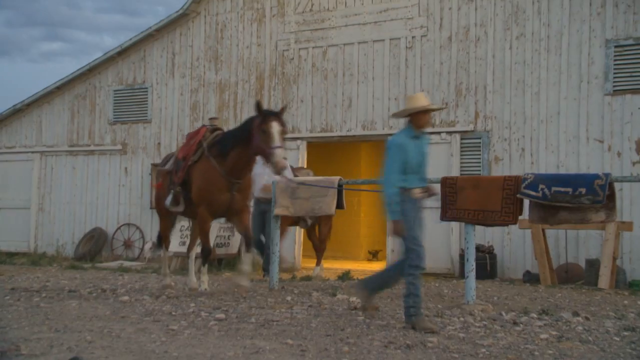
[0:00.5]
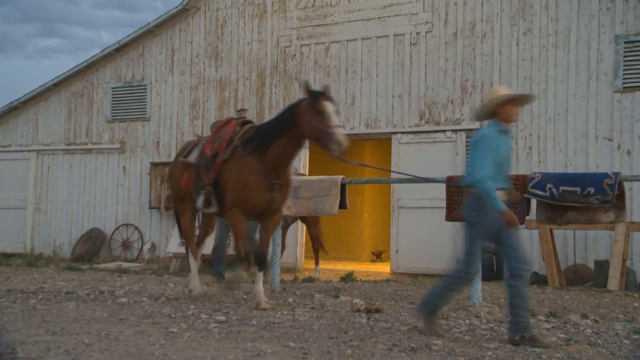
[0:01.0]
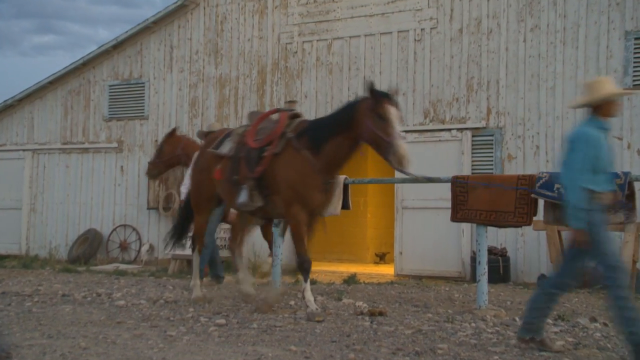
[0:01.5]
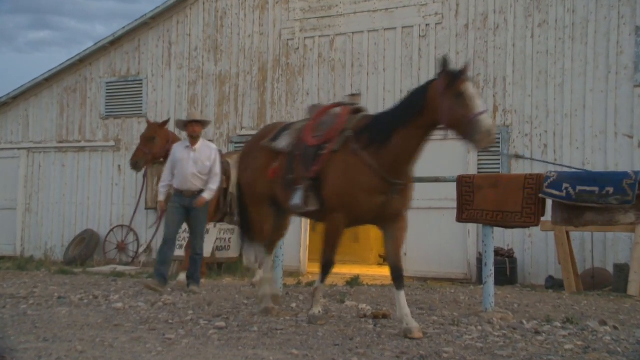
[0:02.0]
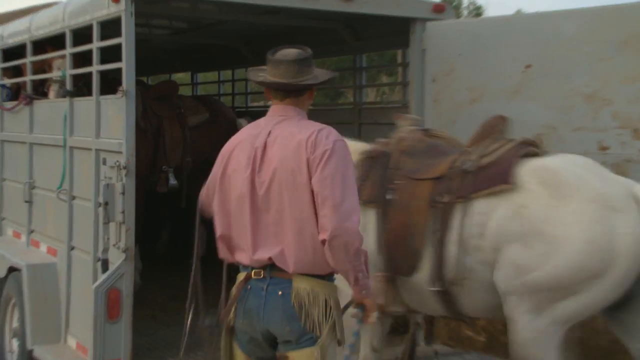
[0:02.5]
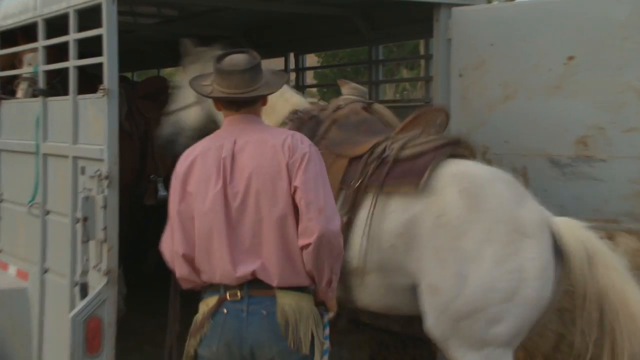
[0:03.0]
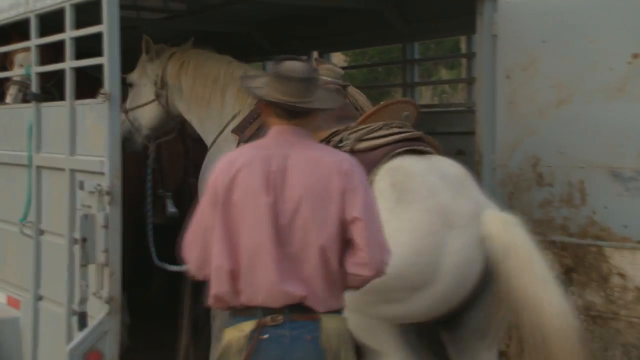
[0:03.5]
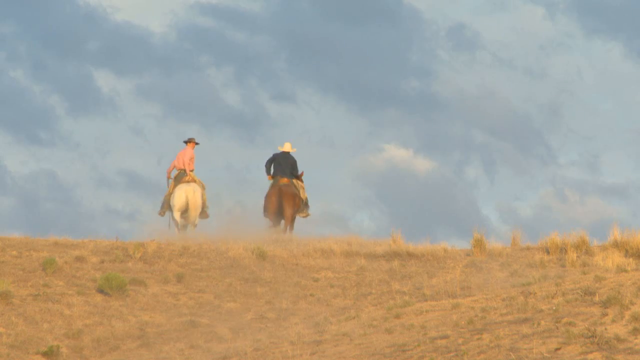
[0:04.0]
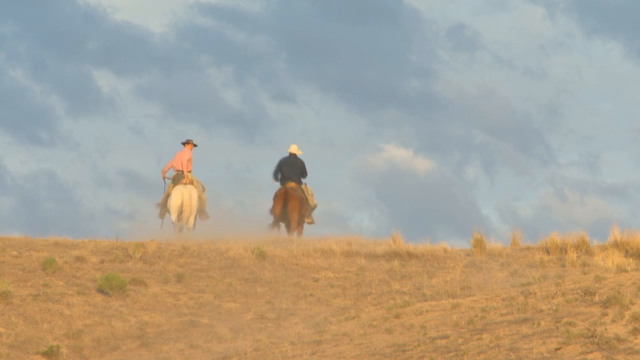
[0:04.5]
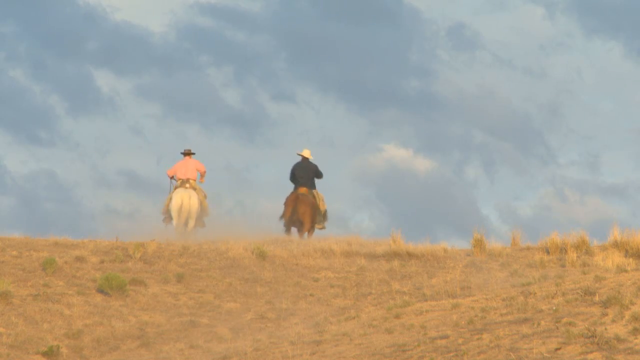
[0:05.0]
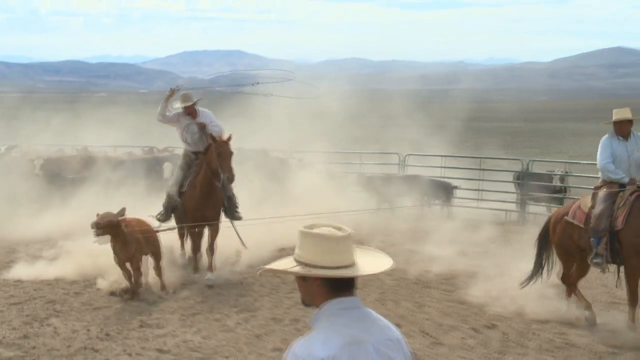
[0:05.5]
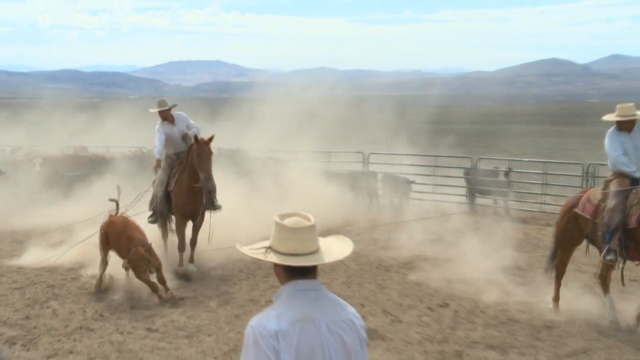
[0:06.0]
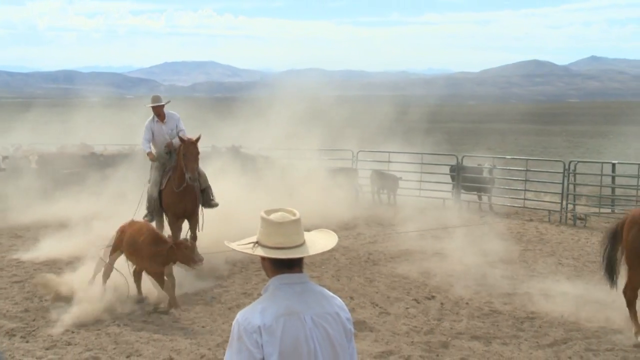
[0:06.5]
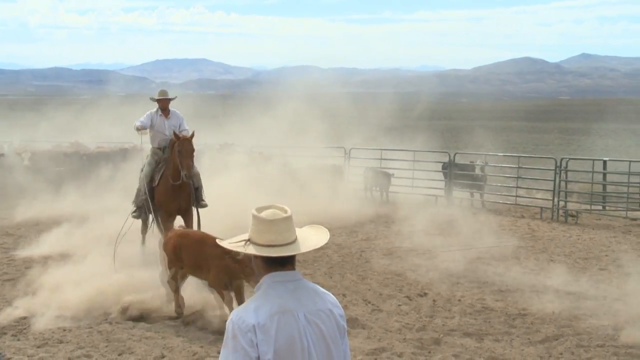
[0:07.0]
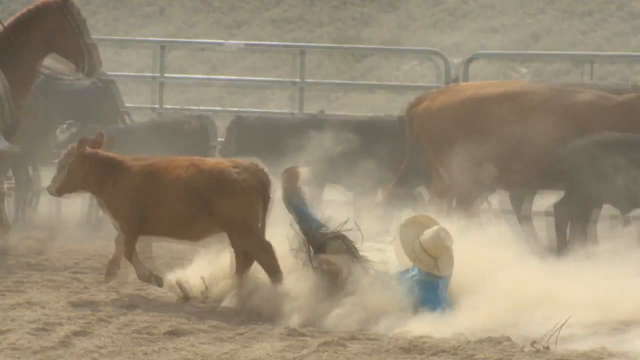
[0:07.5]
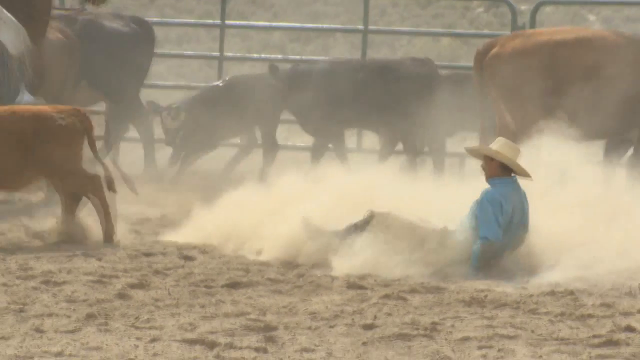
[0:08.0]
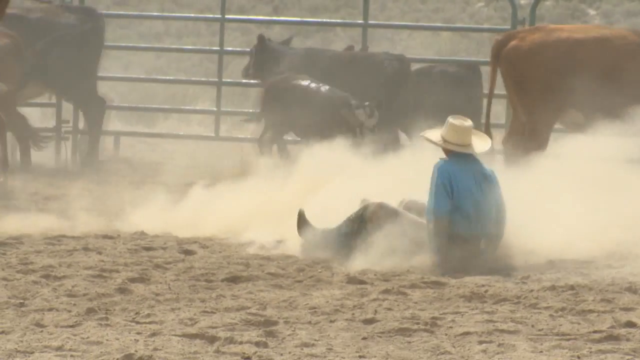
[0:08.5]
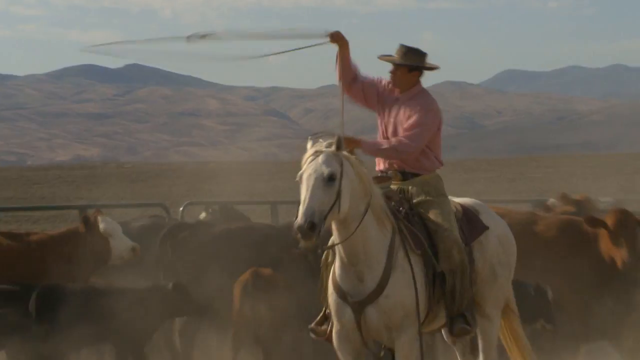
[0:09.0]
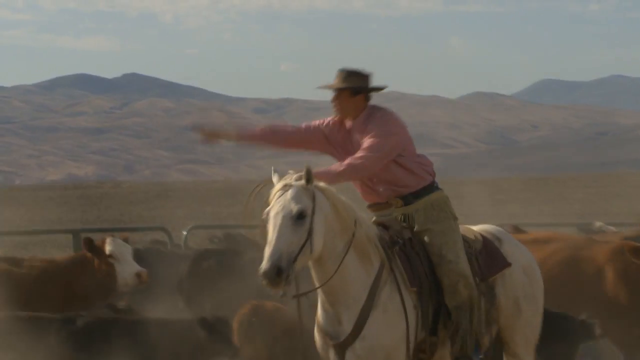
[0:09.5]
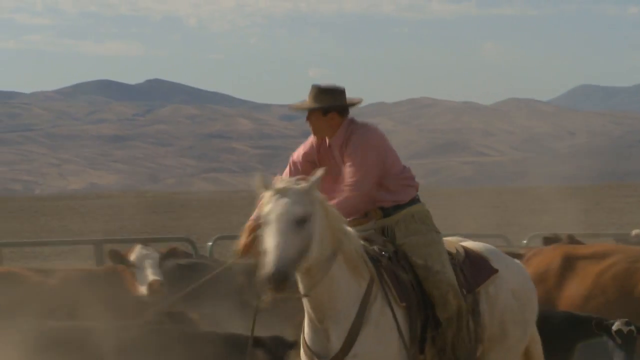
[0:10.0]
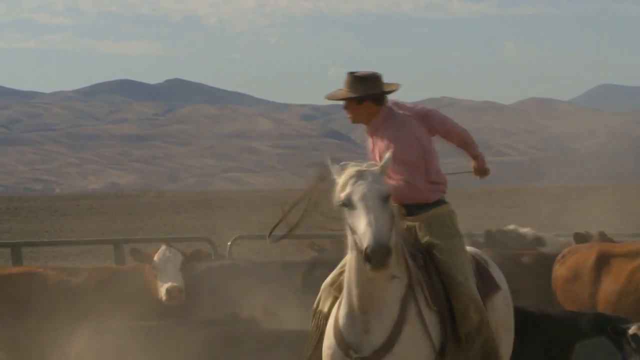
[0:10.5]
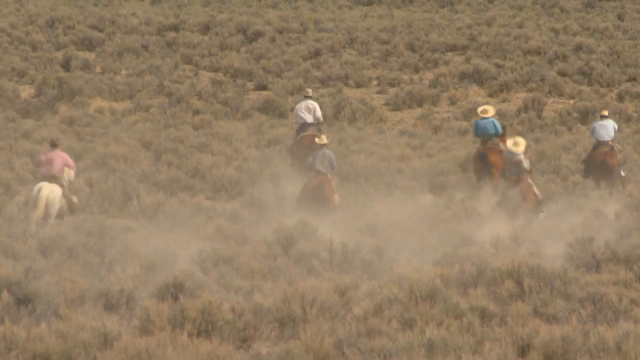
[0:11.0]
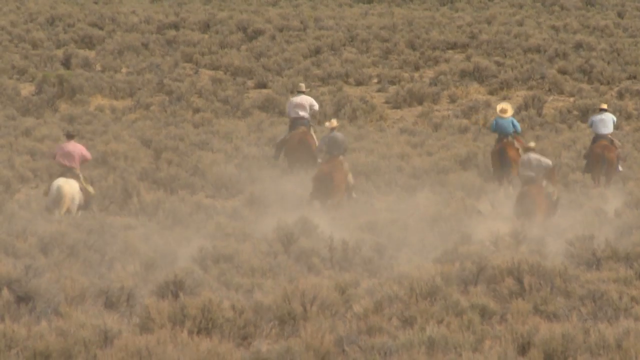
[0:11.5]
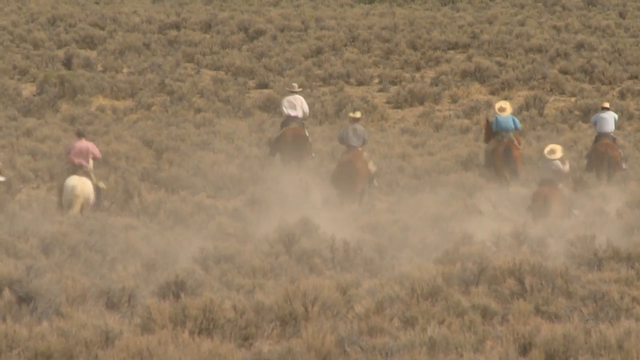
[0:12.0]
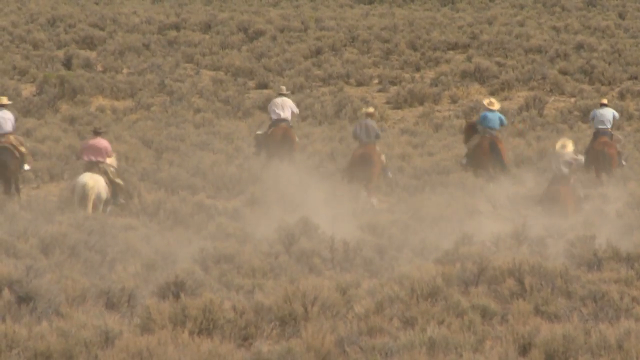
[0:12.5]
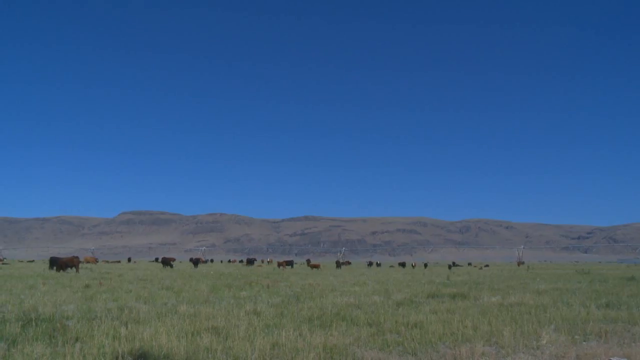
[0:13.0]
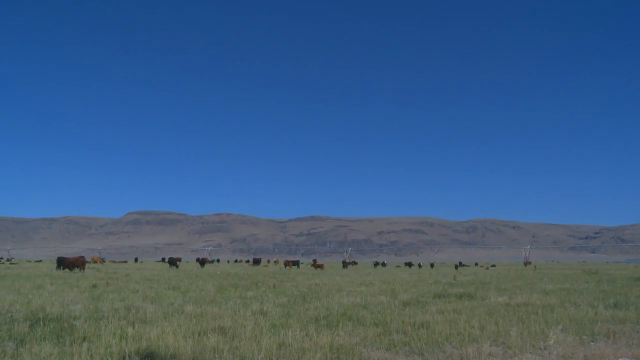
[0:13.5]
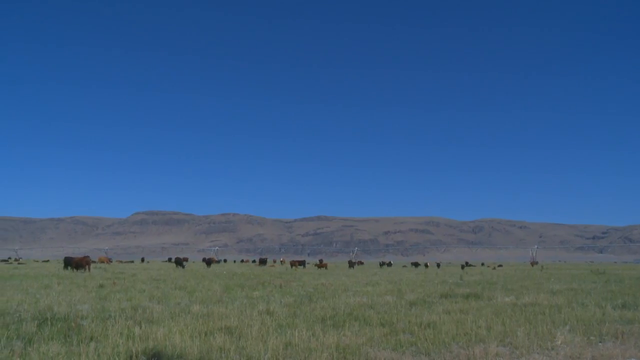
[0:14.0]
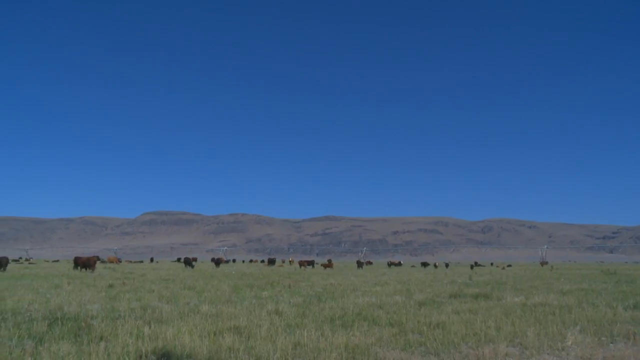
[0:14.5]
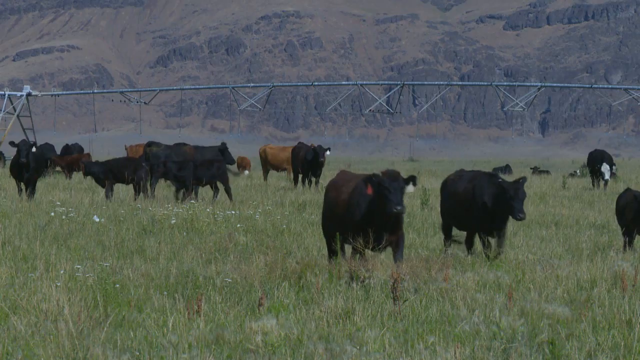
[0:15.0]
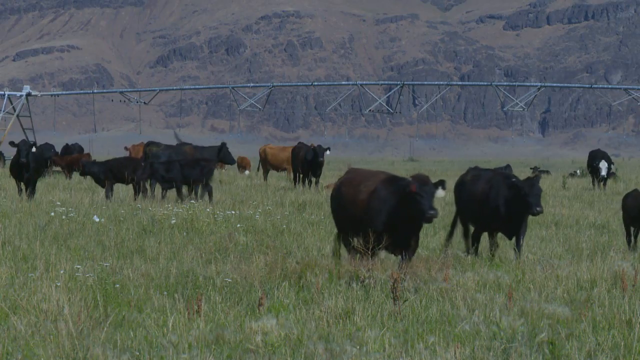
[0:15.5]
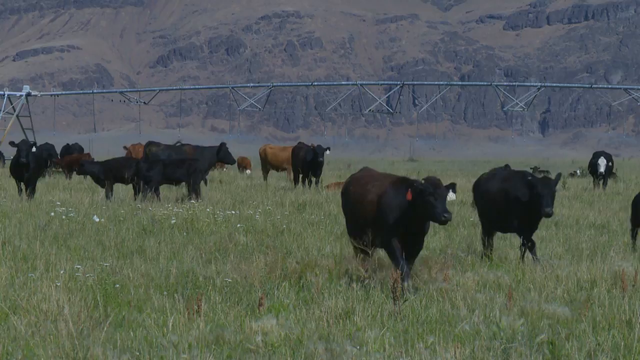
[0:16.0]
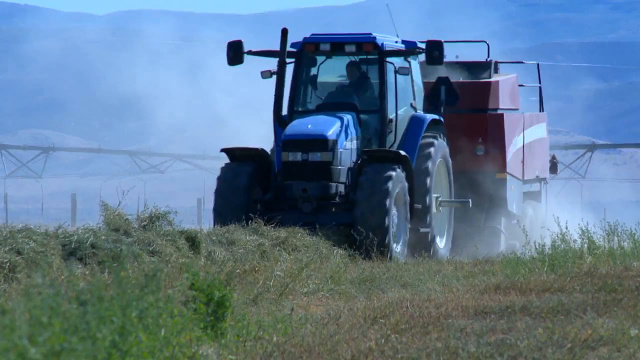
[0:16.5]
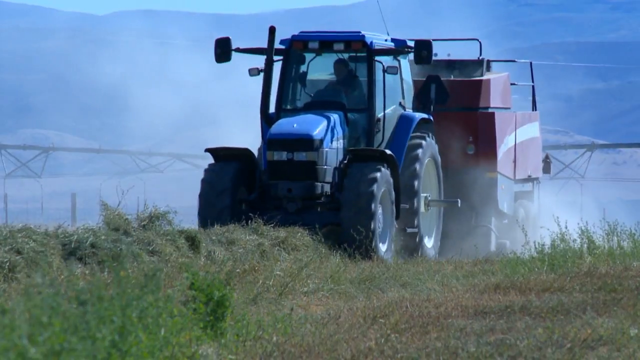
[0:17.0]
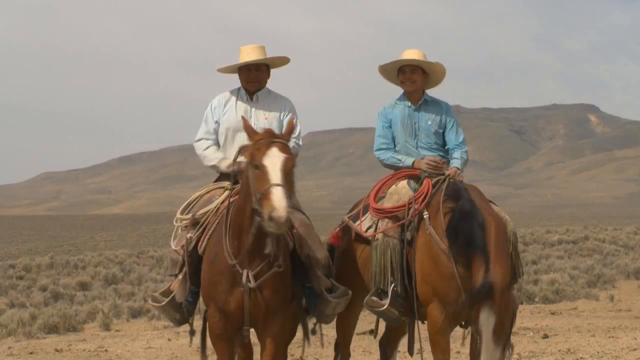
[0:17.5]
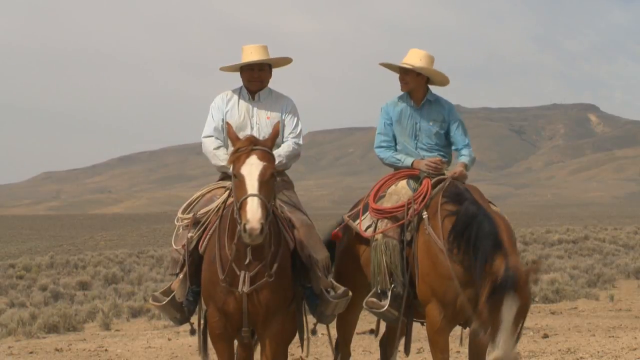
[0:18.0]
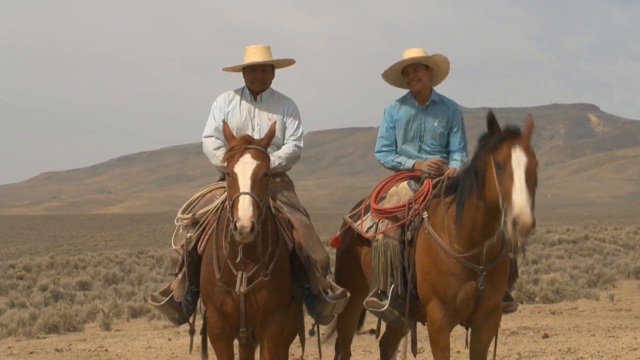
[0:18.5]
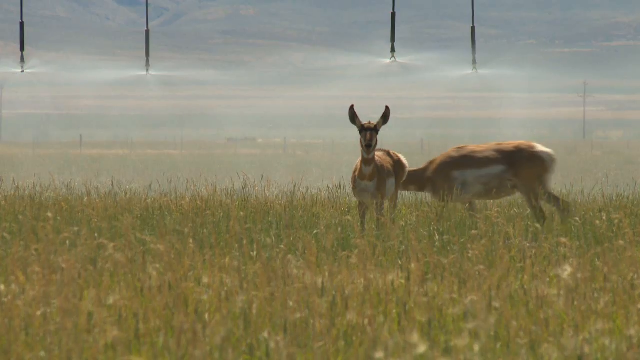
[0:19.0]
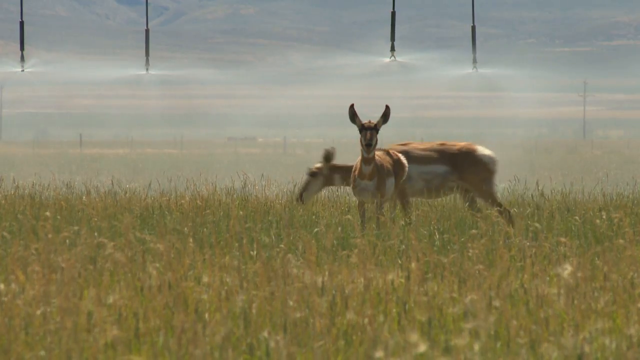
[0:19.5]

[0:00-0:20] A white wooden barn stands in the background as two people lead horses out from the center of the barn. The first is a fairly young person, in their early-to-mid teens, wearing a turquoise long-sleeve shirt, jeans, a belt and a cowboy hat, leading a brown horse with a black mane and a white stripe down its center and on its feet. Behind him, another gentleman in a white long-sleeve shirt, jeans and a hat leads a horse. The horses have saddles on them. In the background there is some sort of bar or gate with what are perhaps blankets or rugs draped over it, and what looks like a wagon wheel leans against the barn, its paint seemingly worn off. In the distance, a portion of the sky looks cloudy and overcast, and they are walking on a dirt area with rocks. In another scene, a different gentleman wearing a reddish or pink long-sleeve shirt, a small brown, dusty black hat and a belt leads a white horse with a brown saddle into the back of a trailer. Off in the distance, what looks like the same gentleman is on the same horse on the left, alongside another person in a dark blue jacket and white hat on a brown horse; they are riding over dry brush on what looks like a small hill, with the sky in the background still gray and overcast. Next they are inside a ring, apparently roping cattle. In another scene, riders cross a really large field, apparently about six, maybe seven, people on horseback, all wearing long-sleeve shirts and jeans, with cattle out in the field. A tractor then appears, seemingly cutting some of the alfalfa in the field that the cattle eat. Finally, what looks like the two original people appear: the man in the white shirt, jeans and hat on his brown horse on the left, and the younger-looking, mid-to-older teen in a blue long-sleeve shirt and hat on his horse on the right.